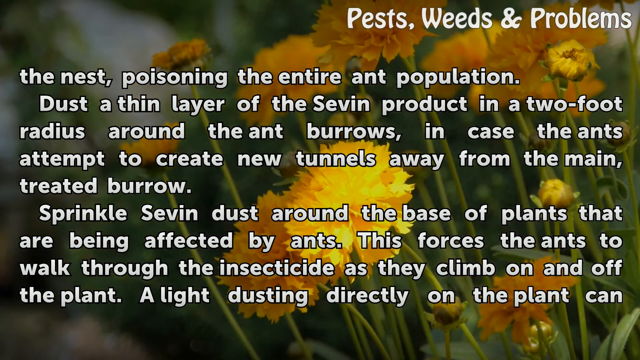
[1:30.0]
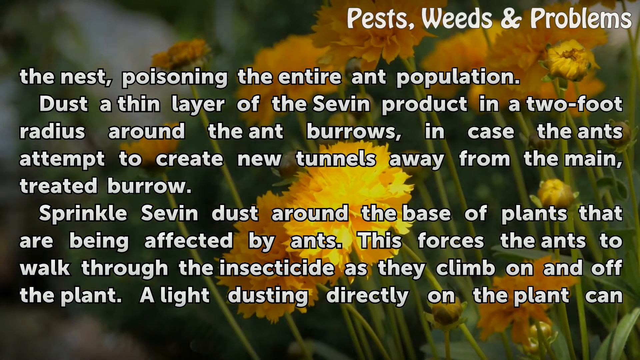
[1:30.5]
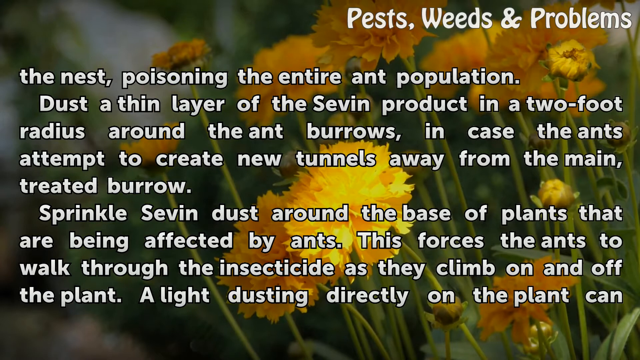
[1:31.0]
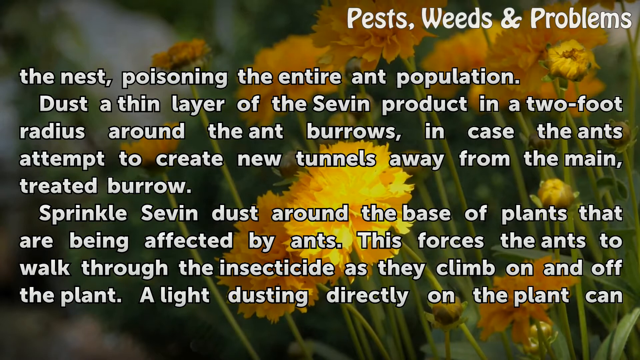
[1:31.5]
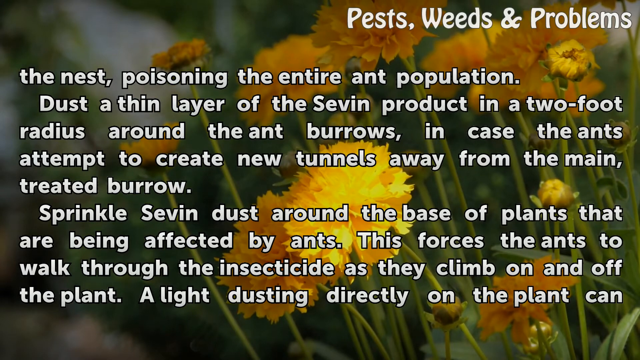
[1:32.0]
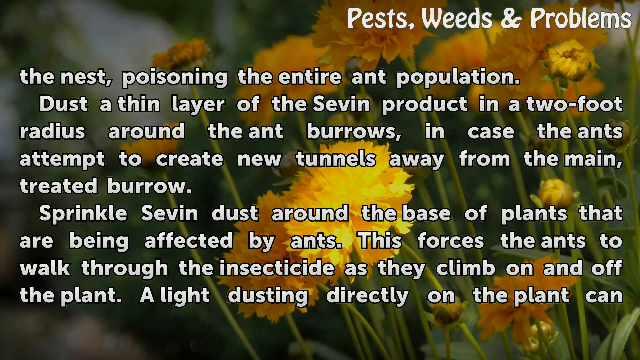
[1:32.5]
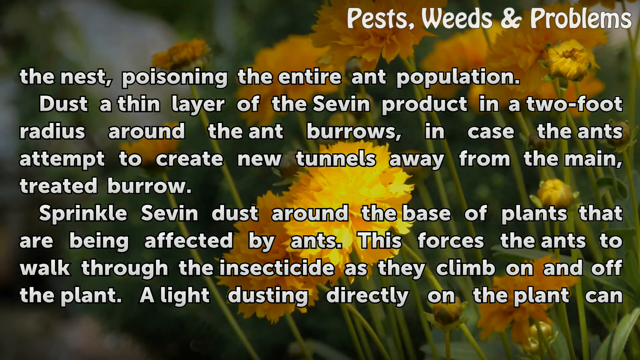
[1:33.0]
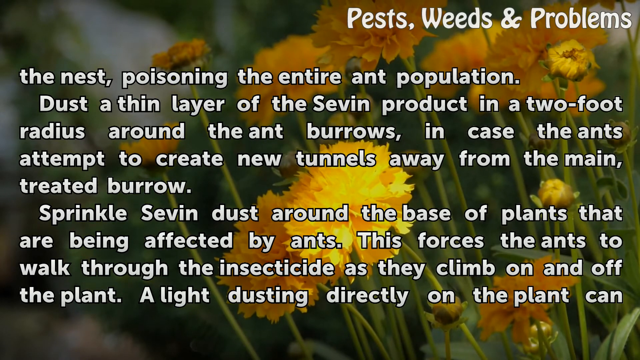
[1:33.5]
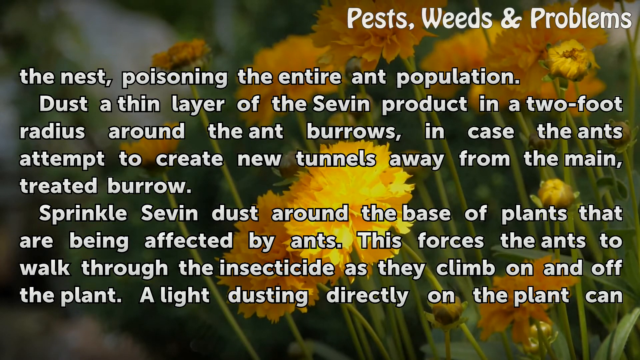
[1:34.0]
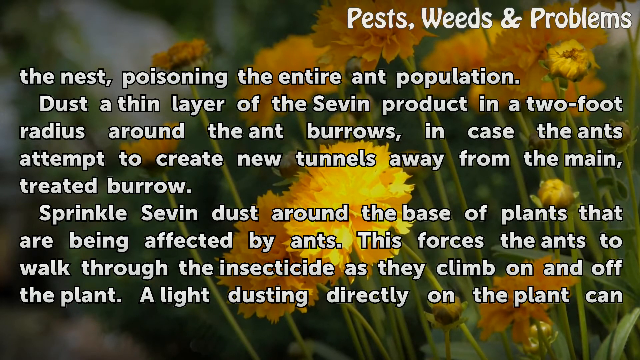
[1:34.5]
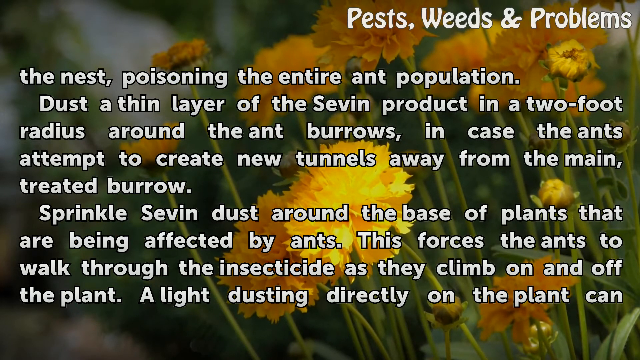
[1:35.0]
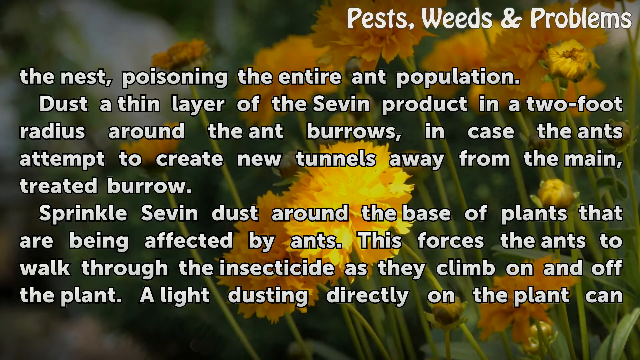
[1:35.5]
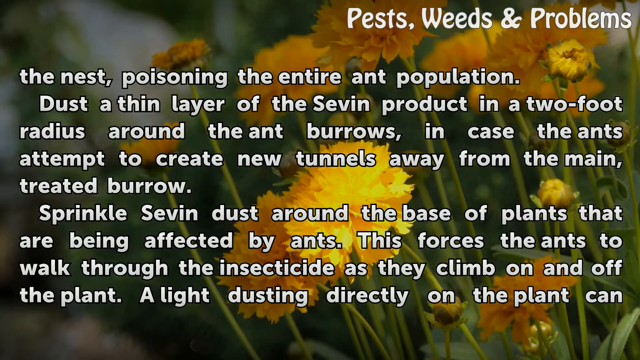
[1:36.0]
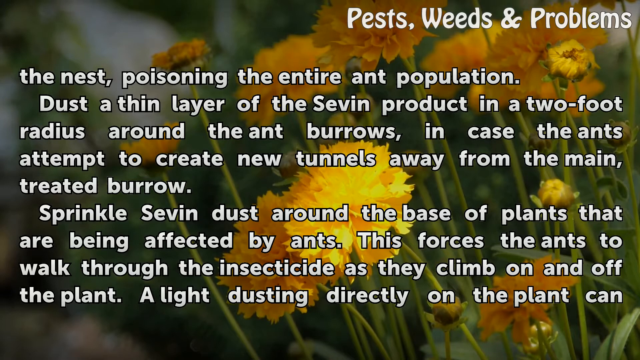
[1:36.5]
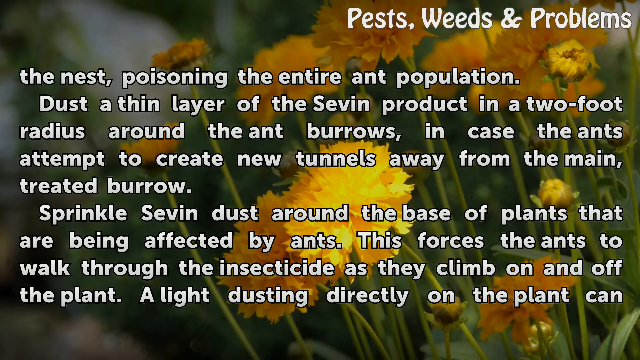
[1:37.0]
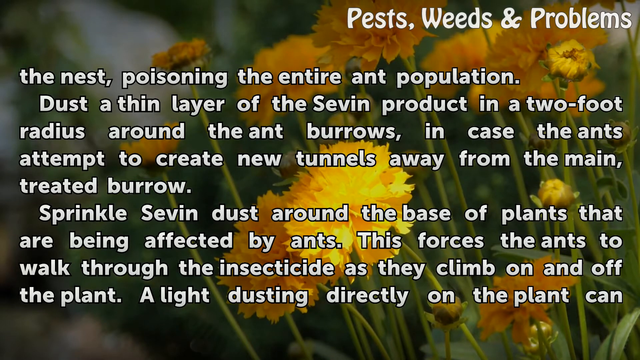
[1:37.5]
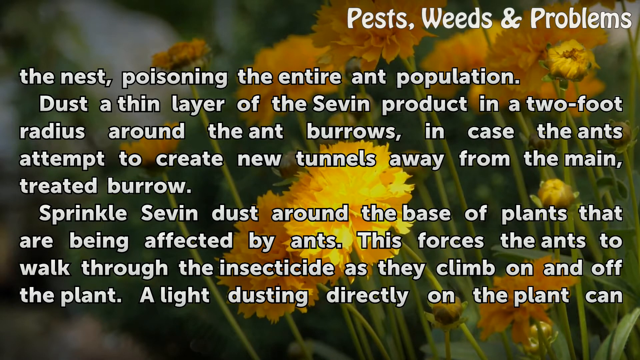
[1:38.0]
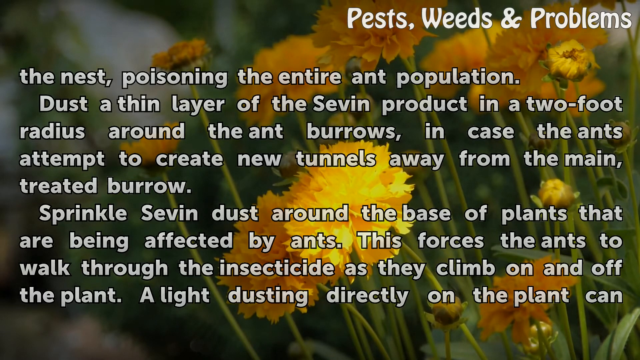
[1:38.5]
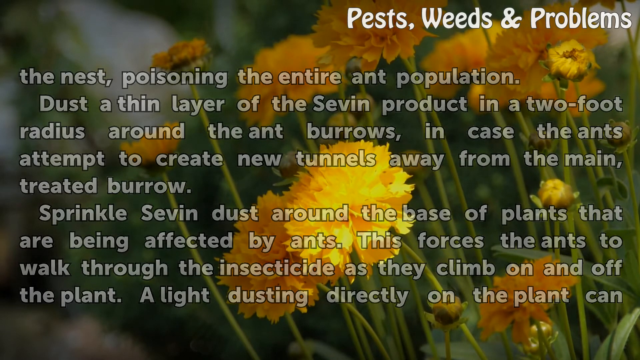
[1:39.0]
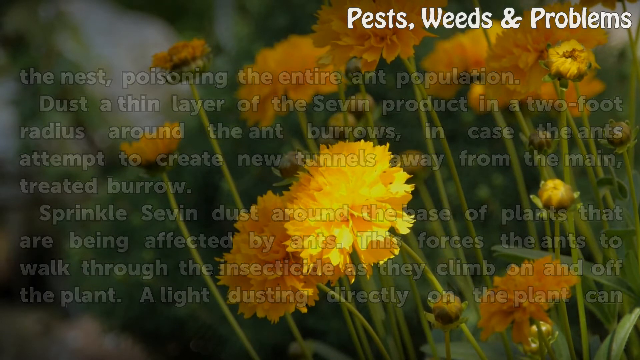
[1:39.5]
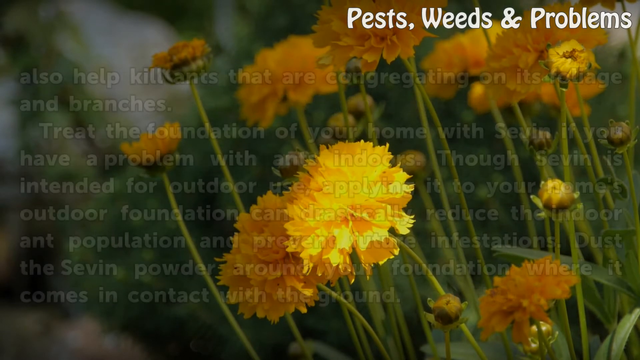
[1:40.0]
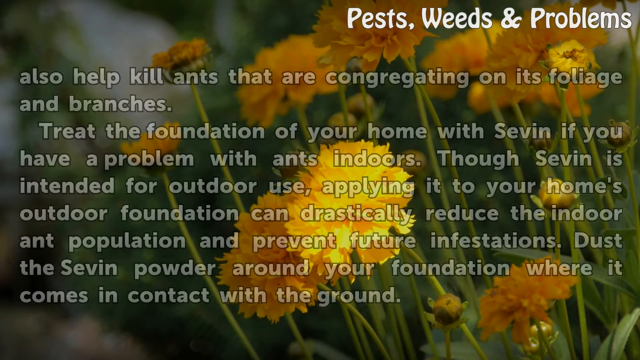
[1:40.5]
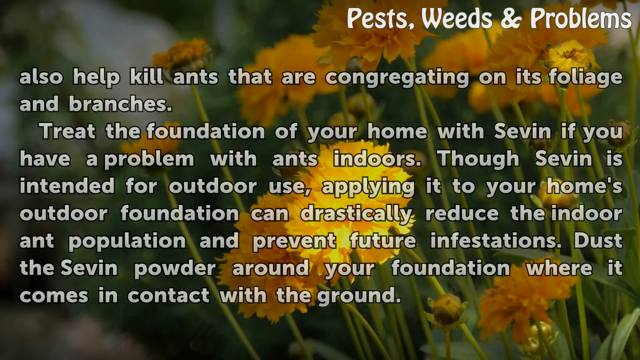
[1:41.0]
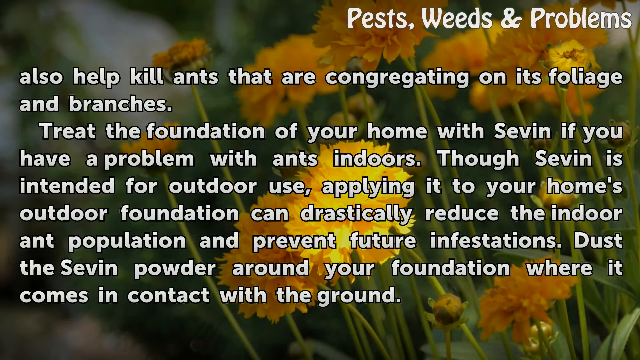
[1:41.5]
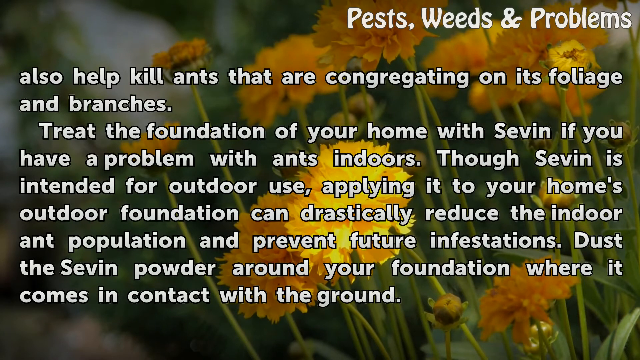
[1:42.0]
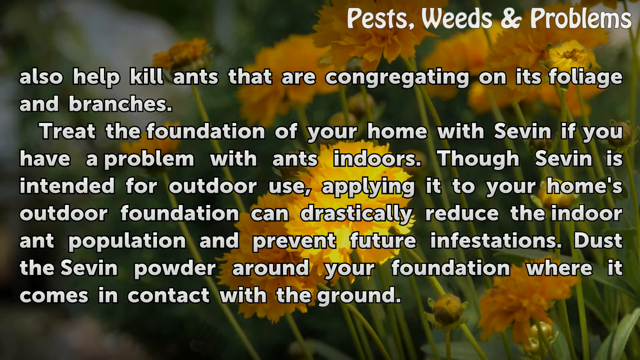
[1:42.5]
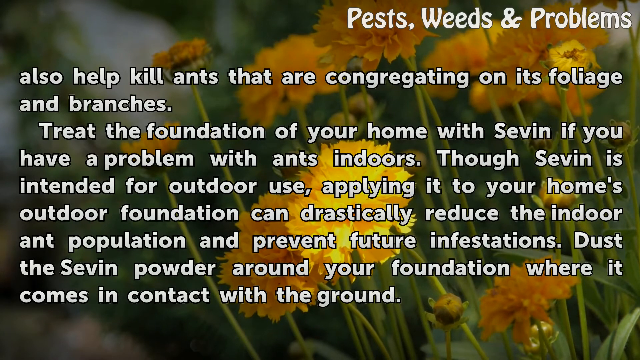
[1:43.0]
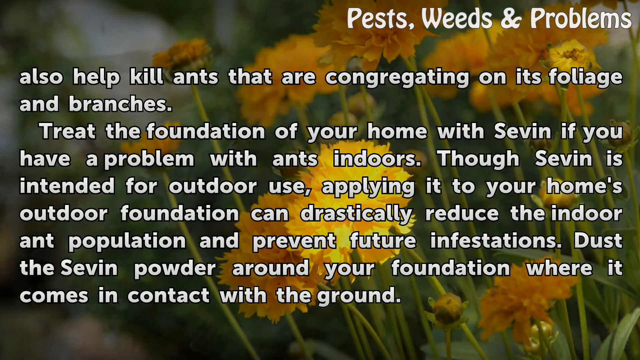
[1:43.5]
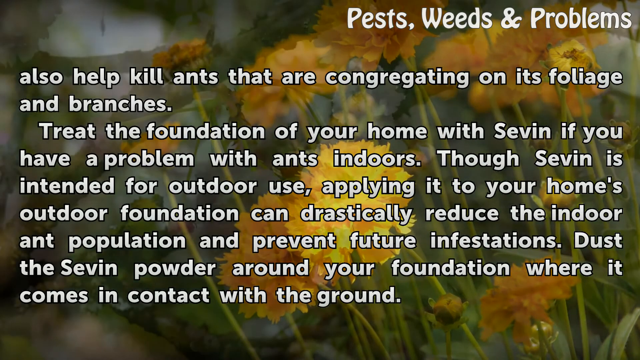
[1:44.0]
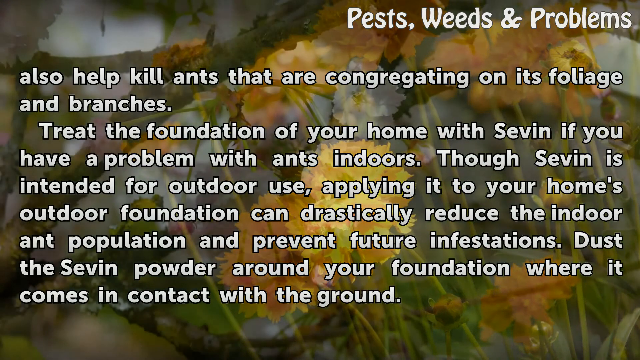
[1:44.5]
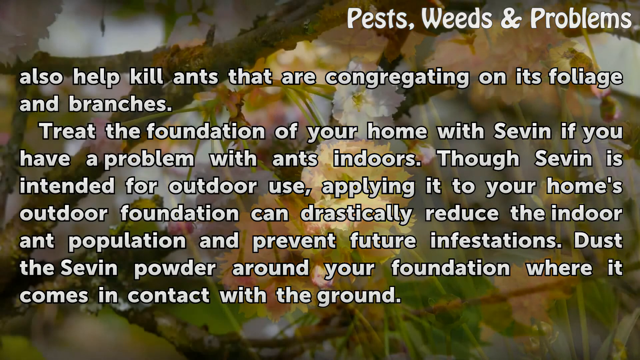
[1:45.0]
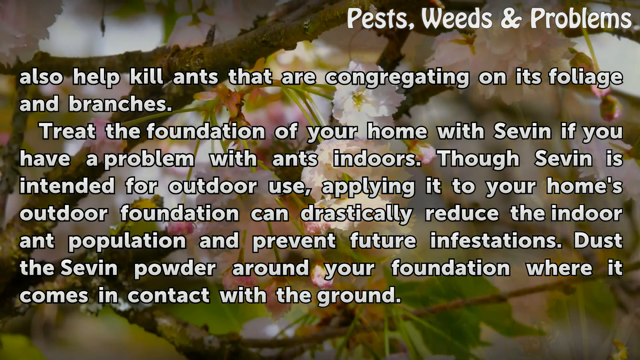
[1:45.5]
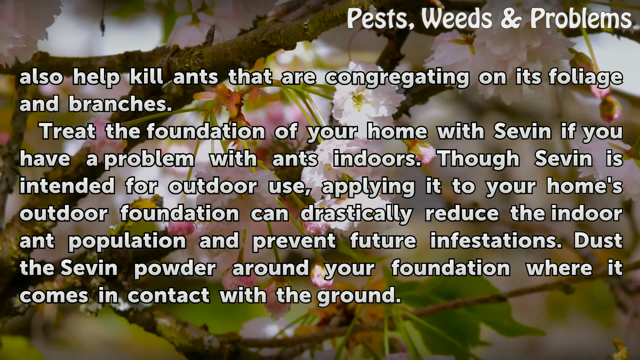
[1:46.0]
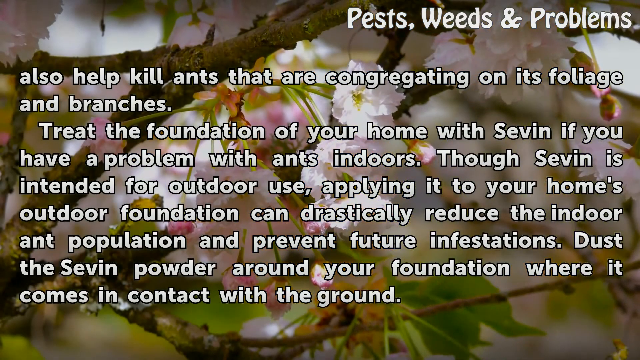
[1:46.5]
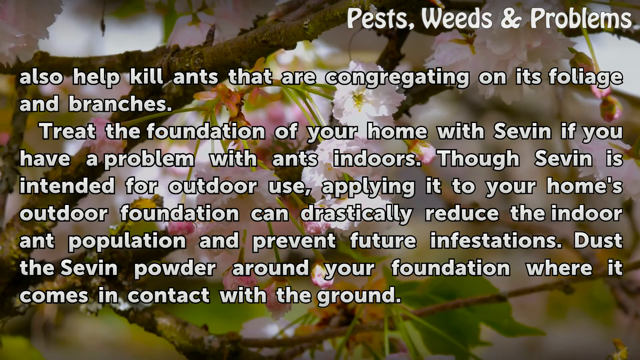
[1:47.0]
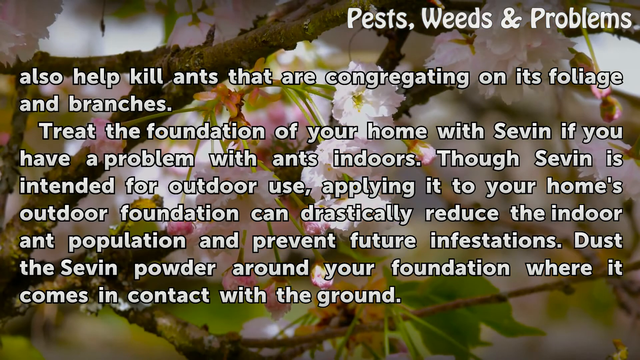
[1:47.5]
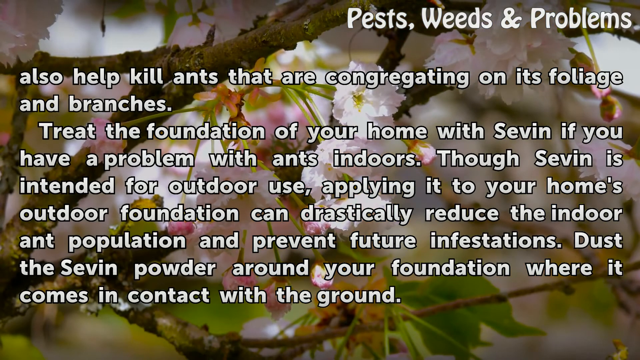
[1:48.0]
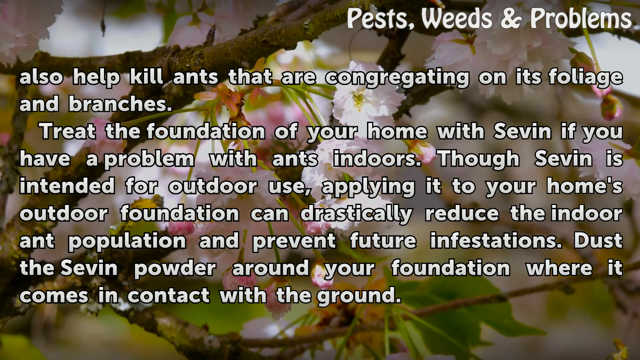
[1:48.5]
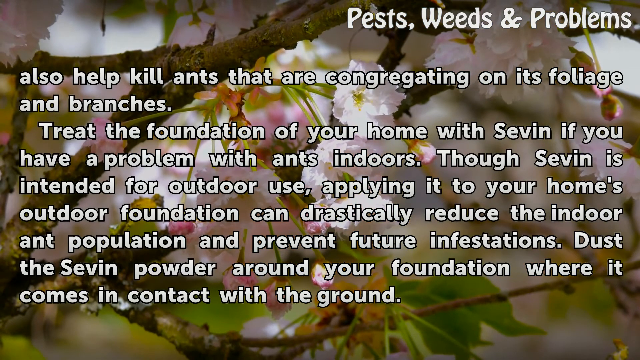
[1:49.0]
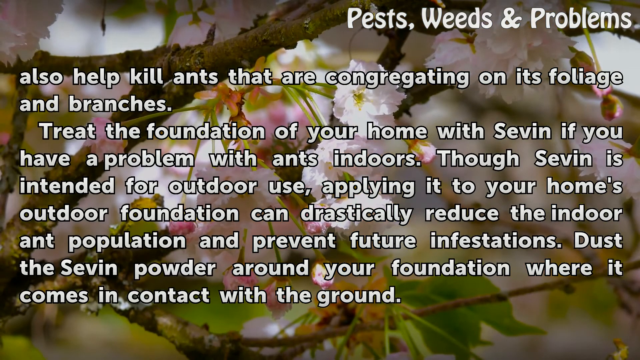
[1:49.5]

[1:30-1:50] More text continues the paragraph: "also help kill ants that are congregating on its foliage and branches. Treat the foundation of your home with SEVIN if you have a problem with ants indoors. Though SEVIN is intended for outdoor use, applying it to your home's outdoor foundation can drastically reduce the indoor ant population and prevent future infestations. Dust the SEVIN powder around your foundation where it comes in contact with the ground." In the background are more yellow flowers, about a dozen, with their stems visible. The background then changes to a branch with some white and rose-coloured flowers.